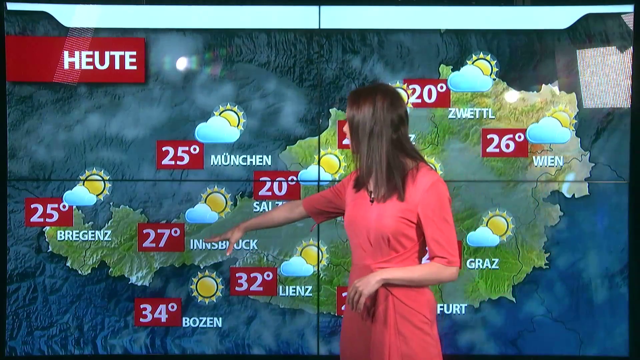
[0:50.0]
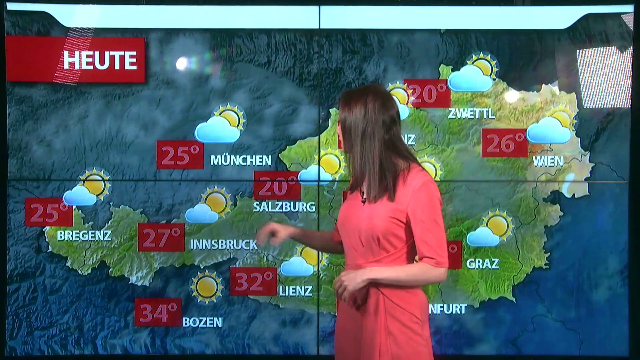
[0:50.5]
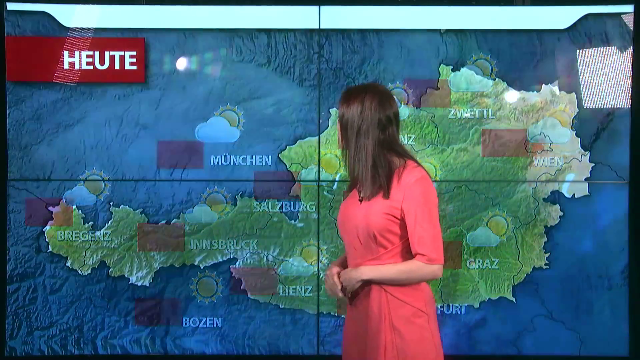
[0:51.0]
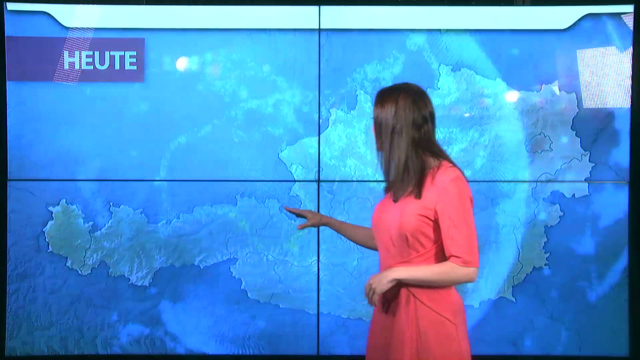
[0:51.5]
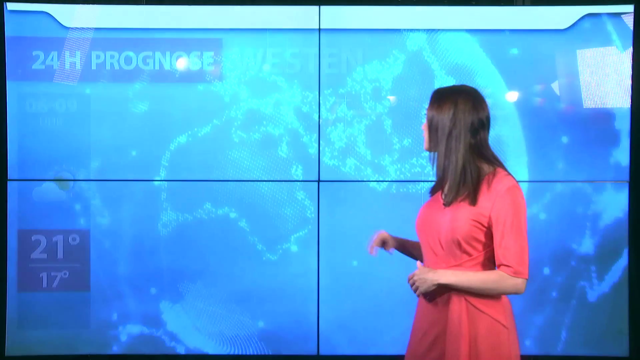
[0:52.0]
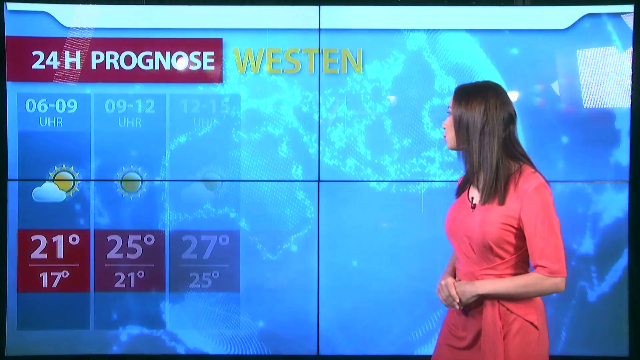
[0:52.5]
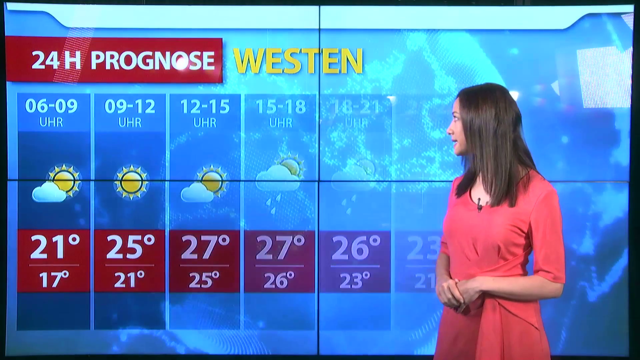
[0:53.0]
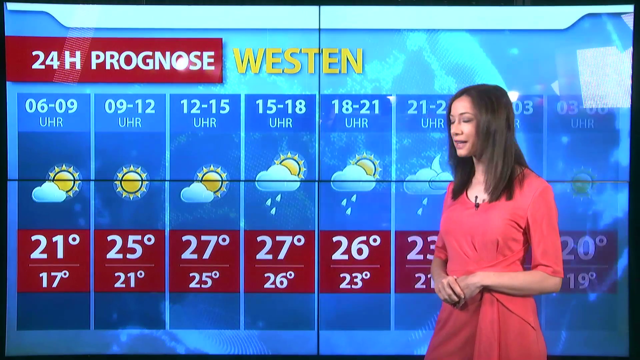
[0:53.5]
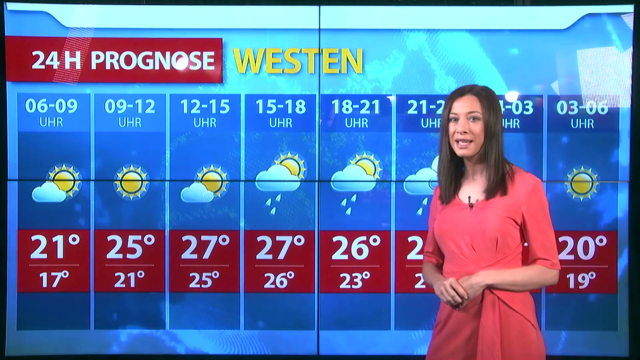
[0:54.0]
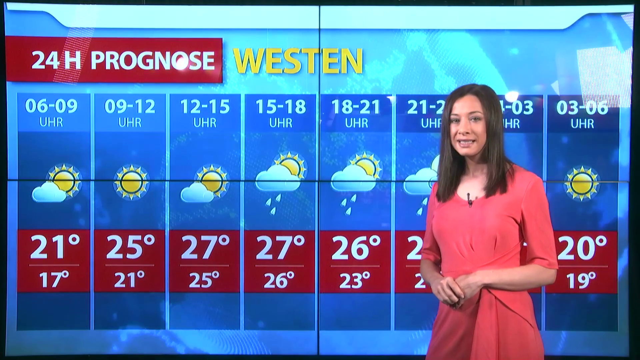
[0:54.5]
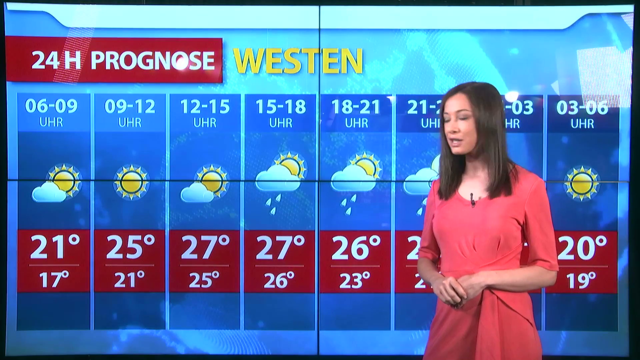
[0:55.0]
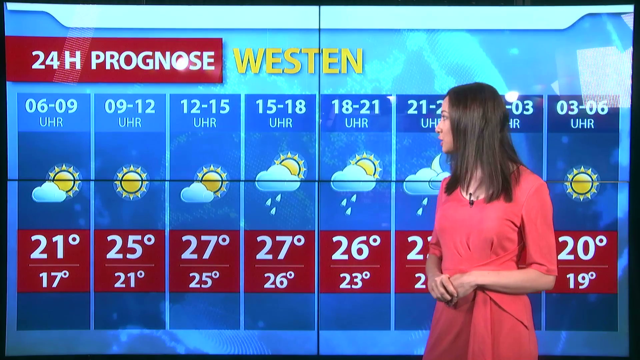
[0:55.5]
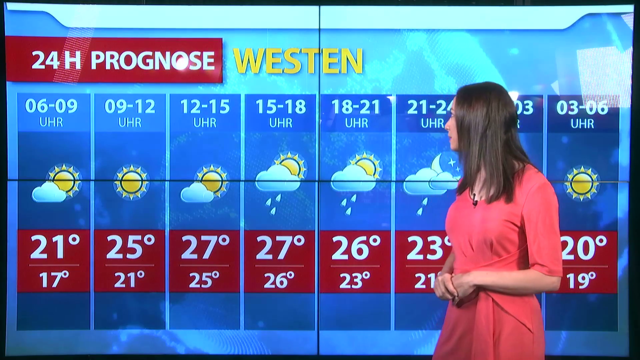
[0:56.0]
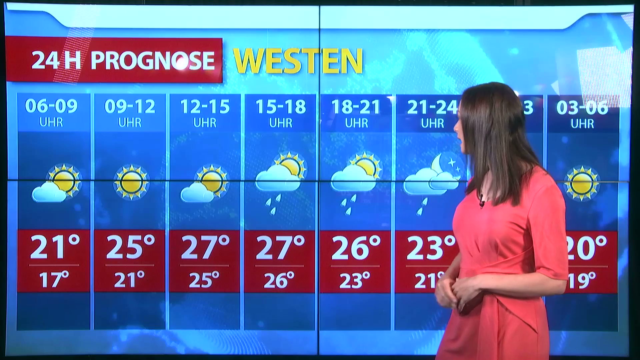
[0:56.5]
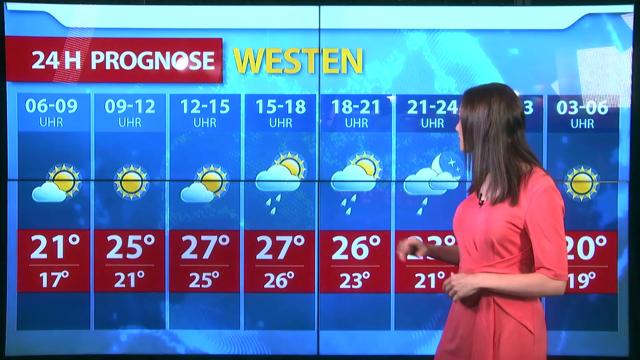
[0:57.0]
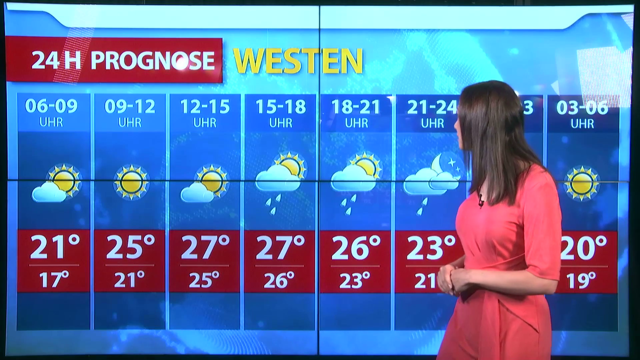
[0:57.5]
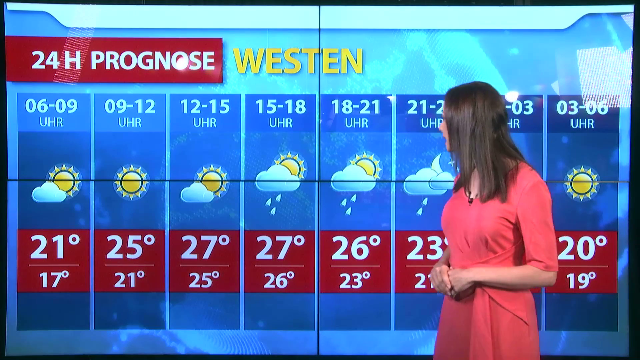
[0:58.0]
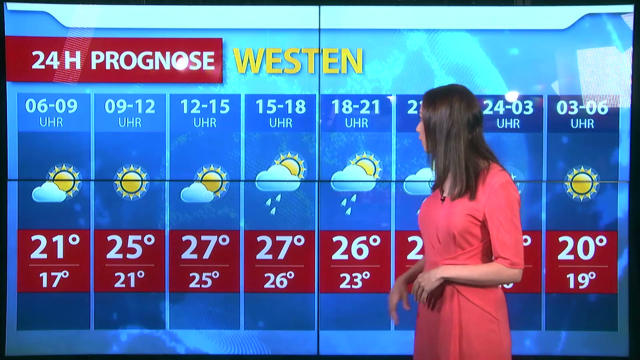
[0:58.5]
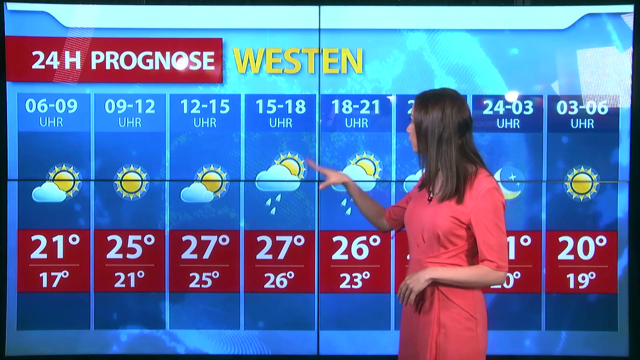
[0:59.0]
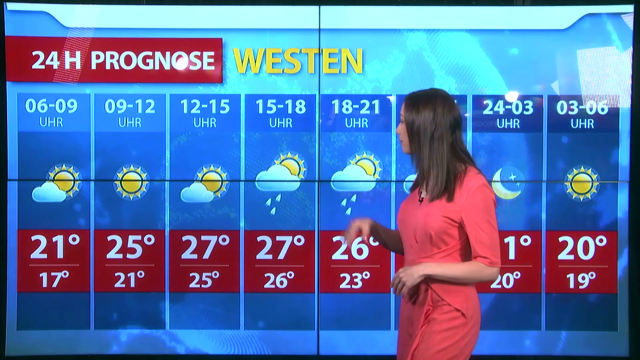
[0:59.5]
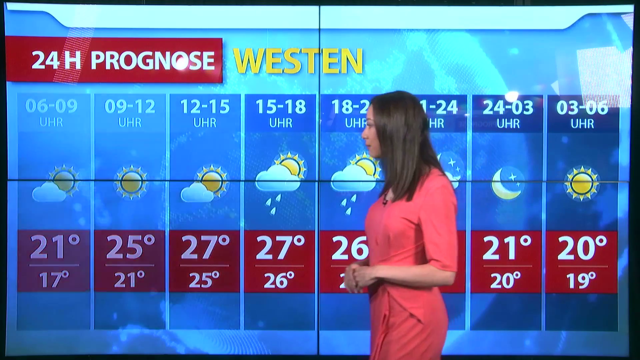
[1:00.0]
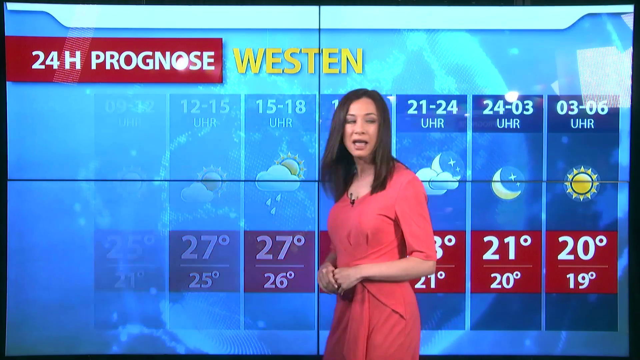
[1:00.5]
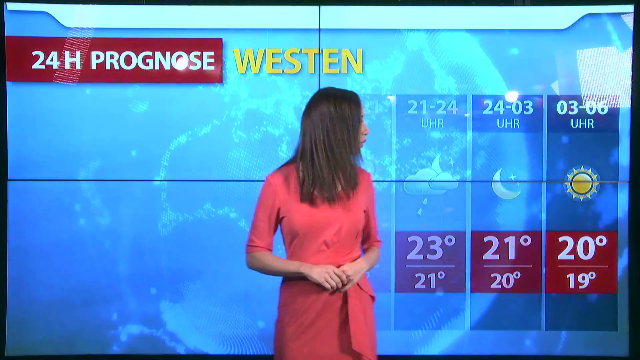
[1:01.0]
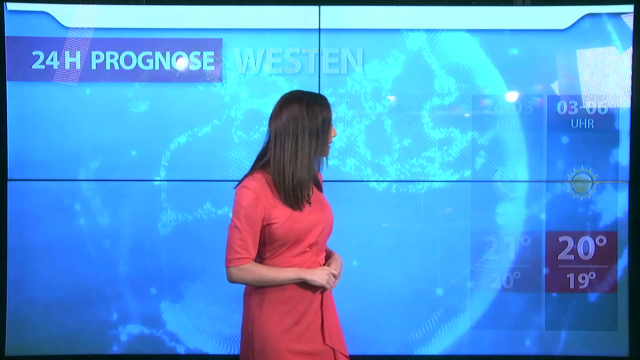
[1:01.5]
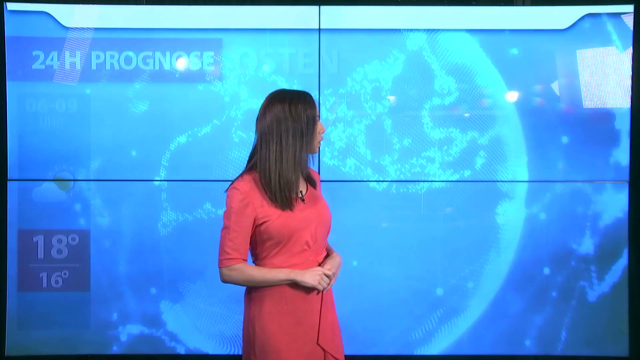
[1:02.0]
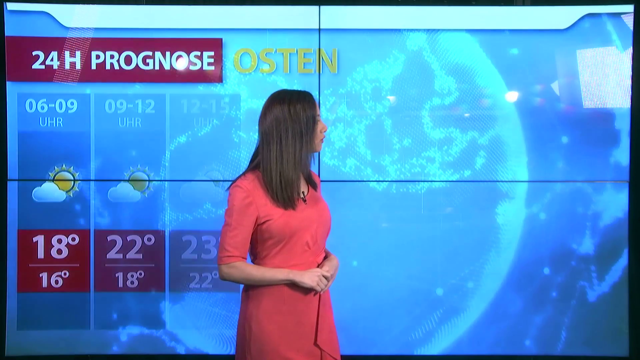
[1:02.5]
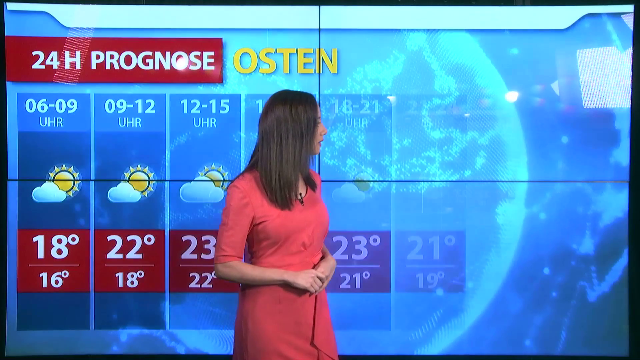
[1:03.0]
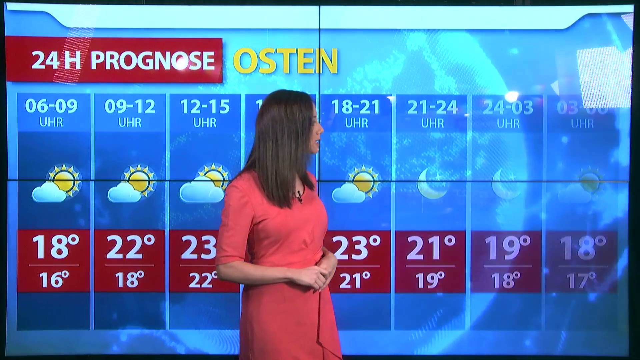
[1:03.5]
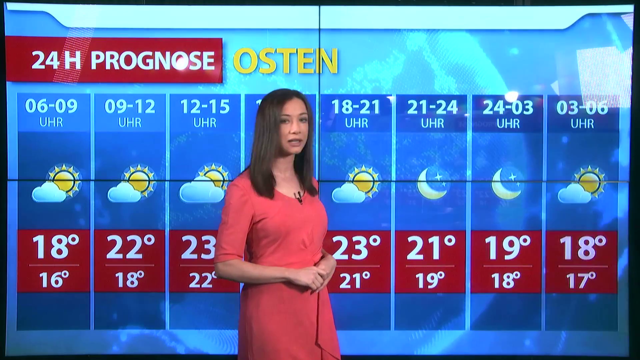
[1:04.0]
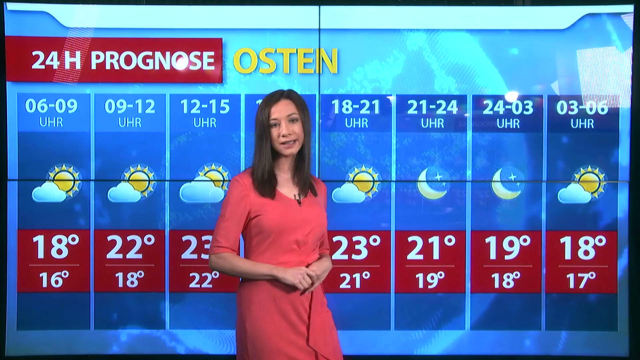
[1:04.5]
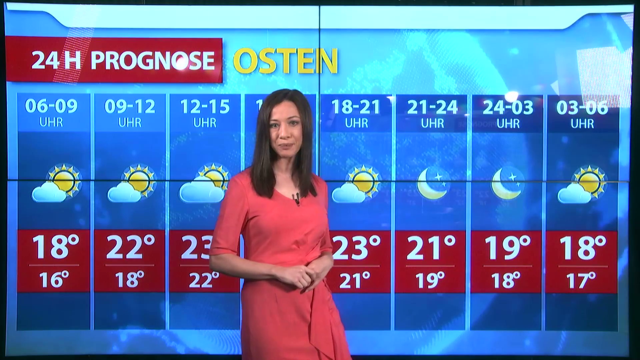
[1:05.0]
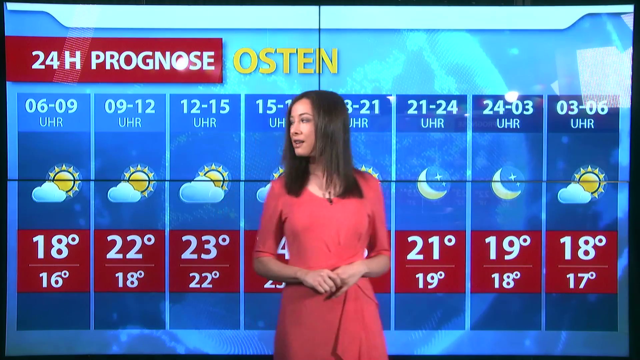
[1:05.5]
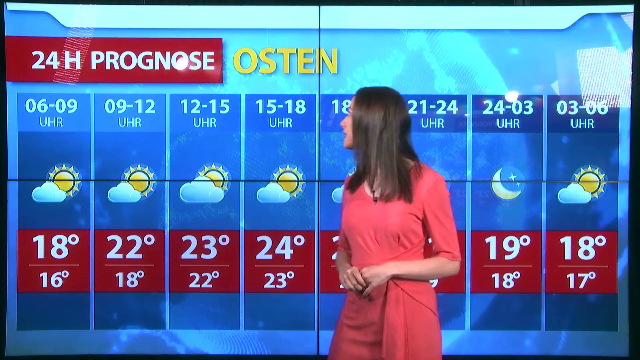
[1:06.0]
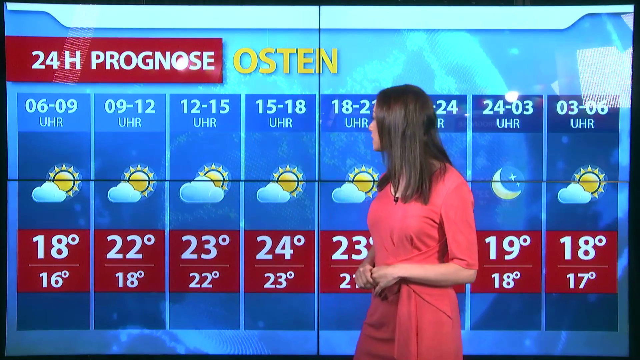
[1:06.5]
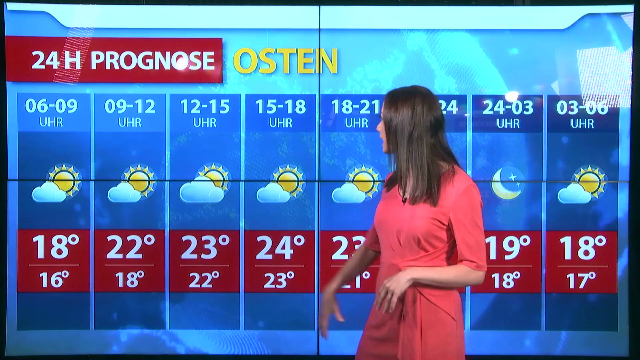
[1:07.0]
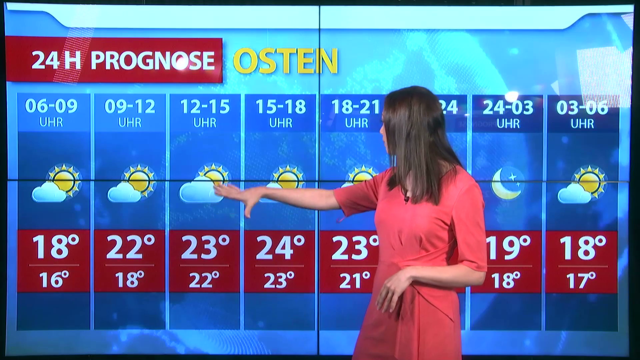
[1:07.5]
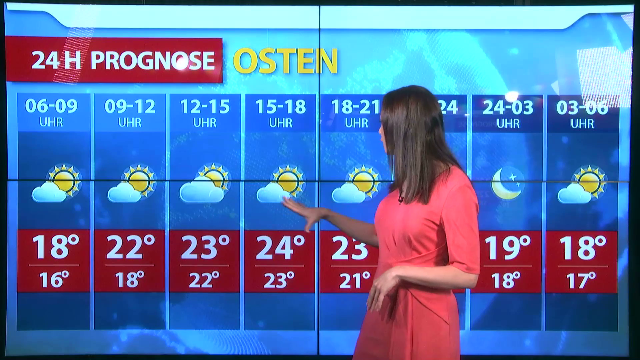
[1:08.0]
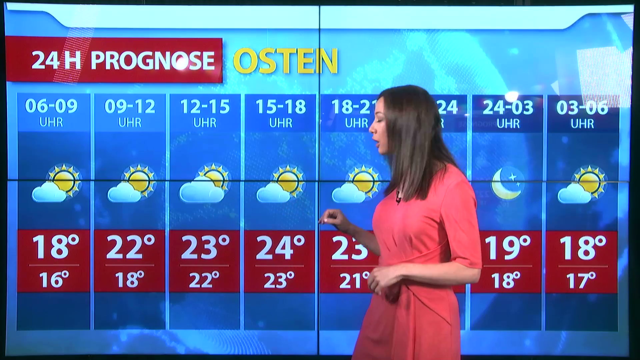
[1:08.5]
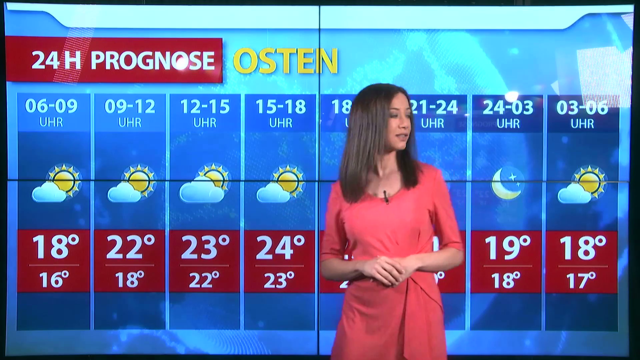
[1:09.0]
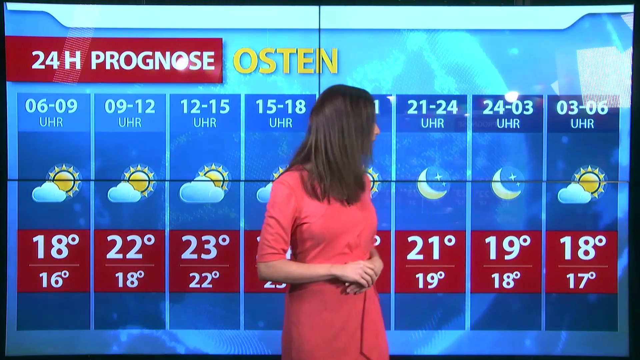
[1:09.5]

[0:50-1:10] The weather presenter is standing in front of a screen. With her right hand she points to Innsbruck, where the weather will be 27 degrees Celsius, and in her left hand she carries what seems like a pen, possibly a remote control for changing the screen. The screen changes again to what appears to be an hourly forecast. From 6 a.m. to 9 a.m. the lowest will be 17 and the highest 21. From 9 a.m. to 12 p.m. the lowest will be 21 and the highest 25. From 12 p.m. to 15 it will be sunny, with a lowest of 25 and a highest of 27. From 3 p.m. to 6 p.m. the lowest will be 26 and the highest 27, with scattered showers. From 6 p.m. to 9 p.m. the lowest will be 23 and the highest 26 degrees Celsius.